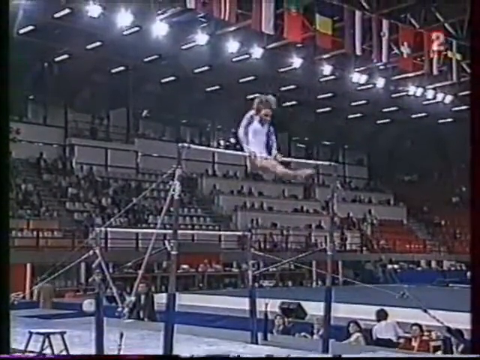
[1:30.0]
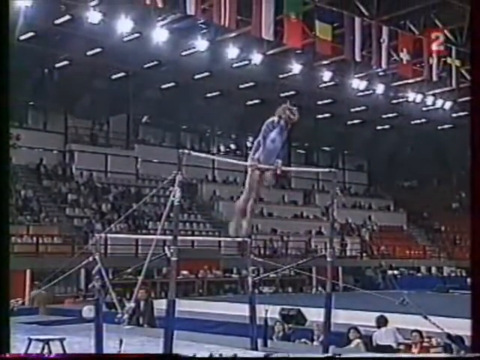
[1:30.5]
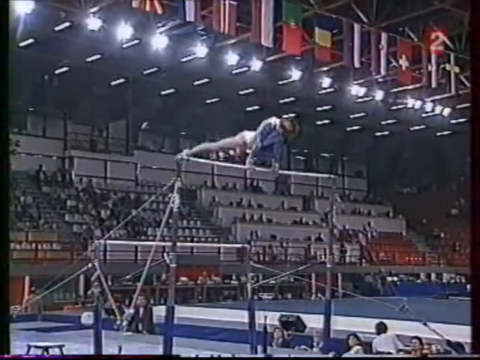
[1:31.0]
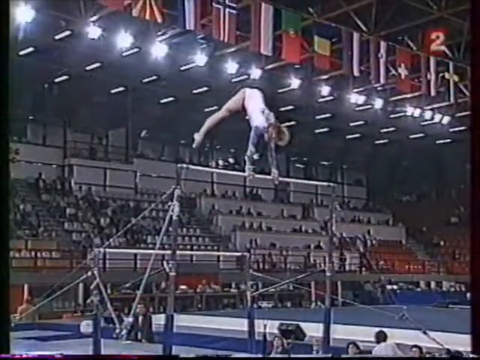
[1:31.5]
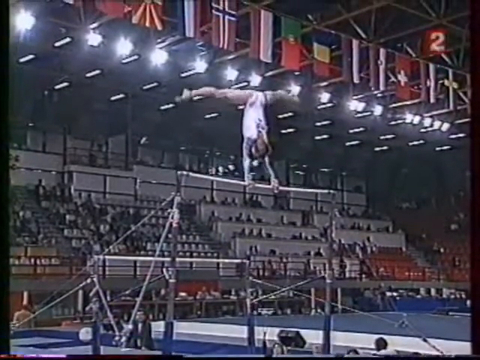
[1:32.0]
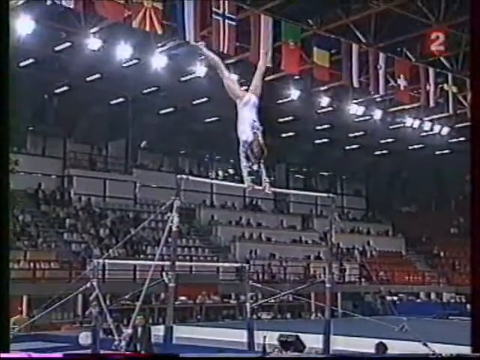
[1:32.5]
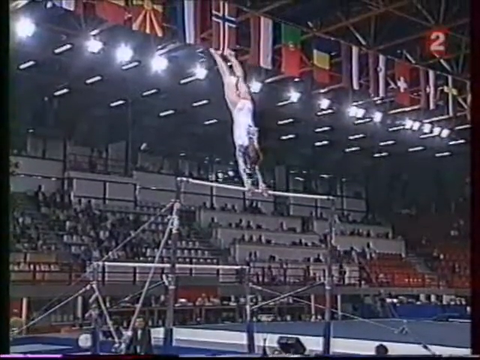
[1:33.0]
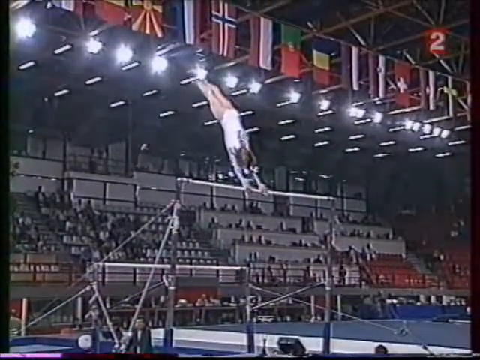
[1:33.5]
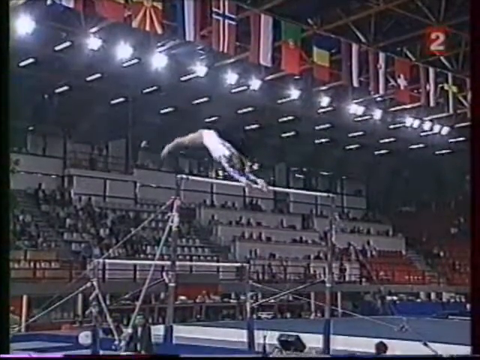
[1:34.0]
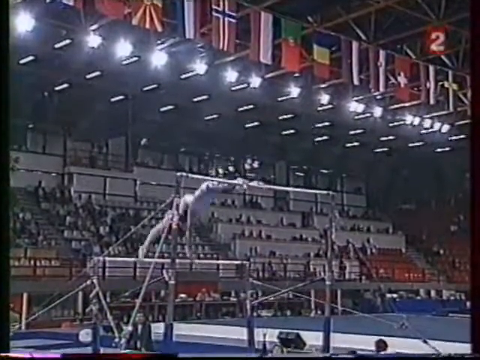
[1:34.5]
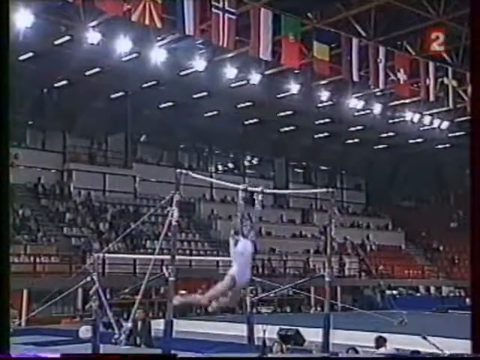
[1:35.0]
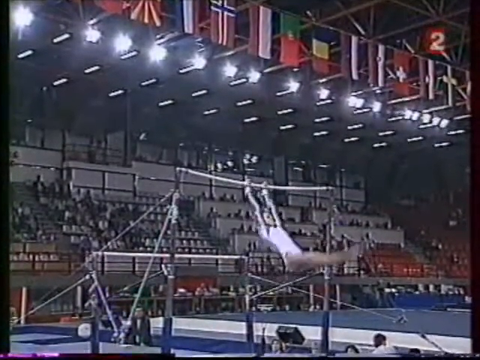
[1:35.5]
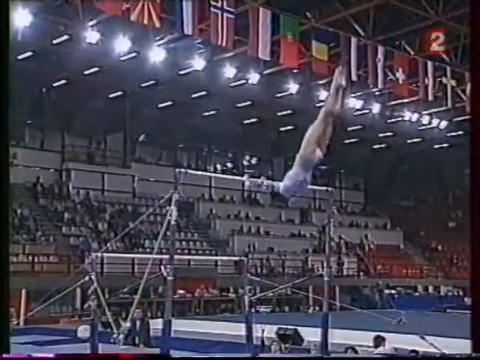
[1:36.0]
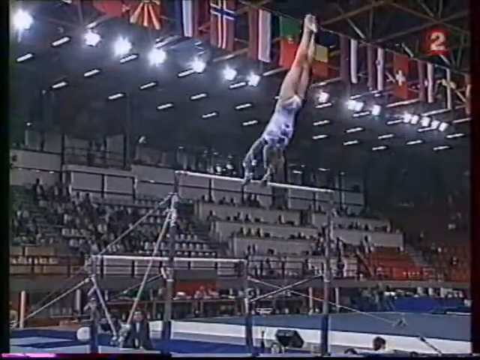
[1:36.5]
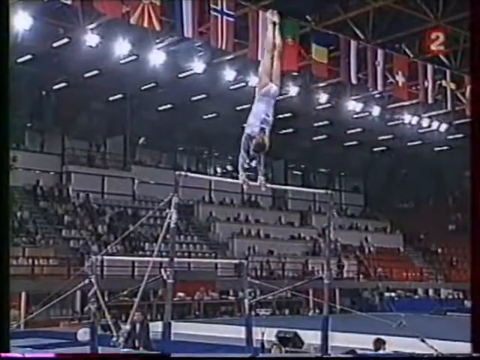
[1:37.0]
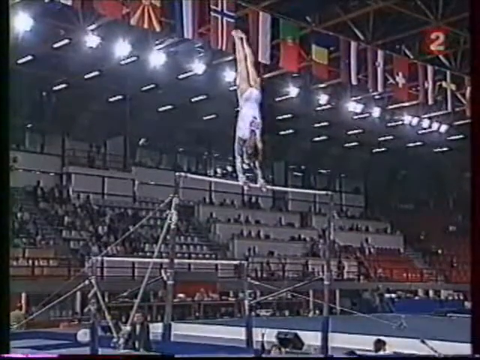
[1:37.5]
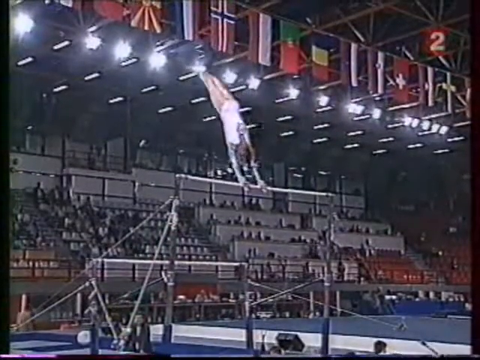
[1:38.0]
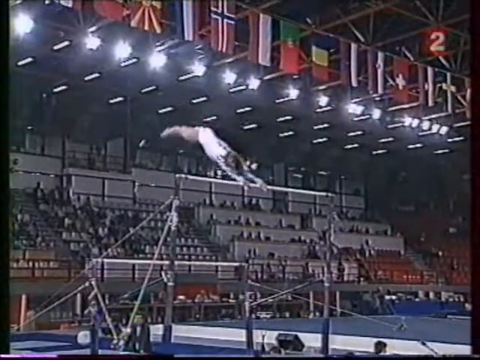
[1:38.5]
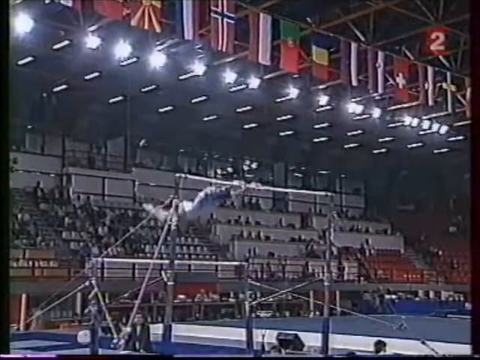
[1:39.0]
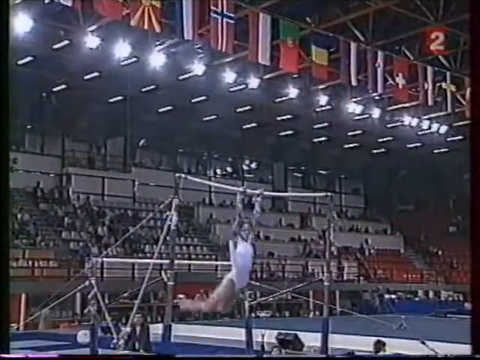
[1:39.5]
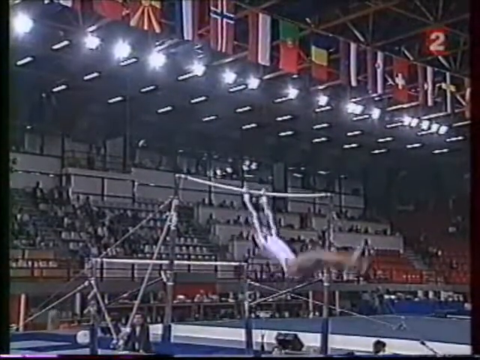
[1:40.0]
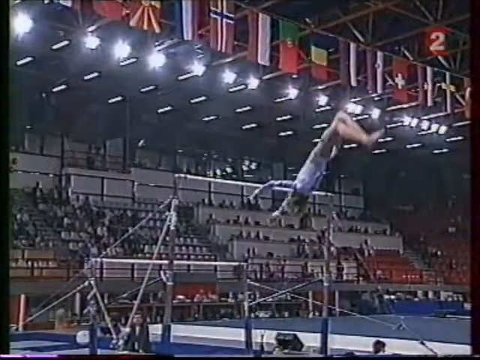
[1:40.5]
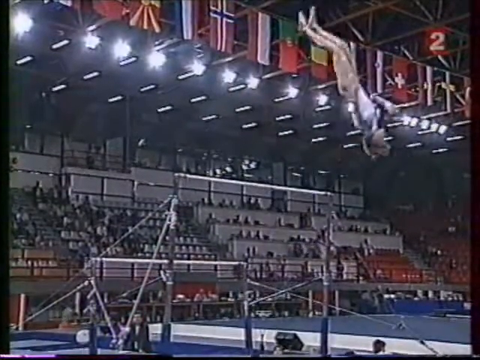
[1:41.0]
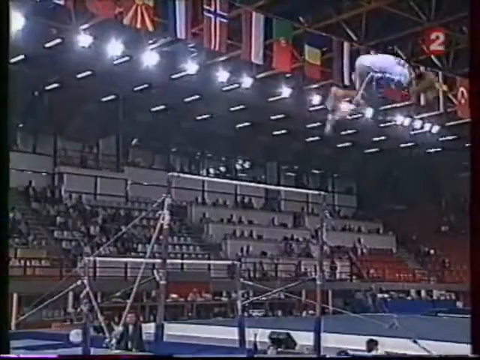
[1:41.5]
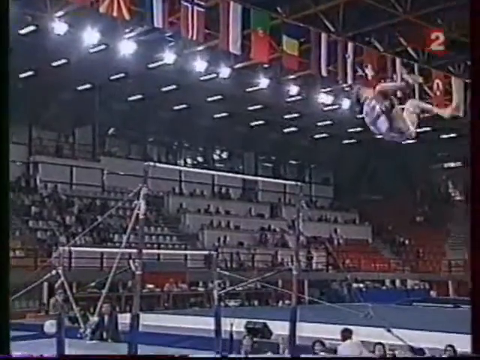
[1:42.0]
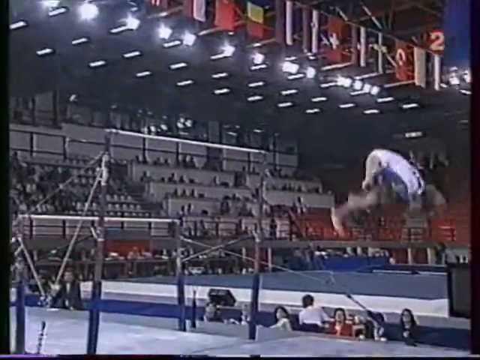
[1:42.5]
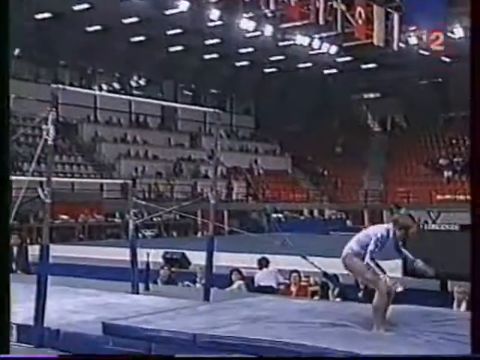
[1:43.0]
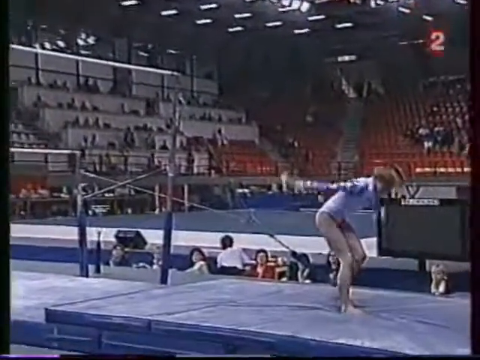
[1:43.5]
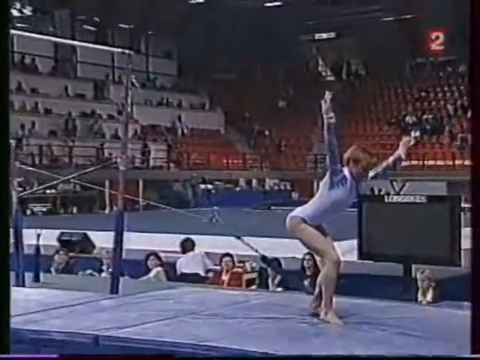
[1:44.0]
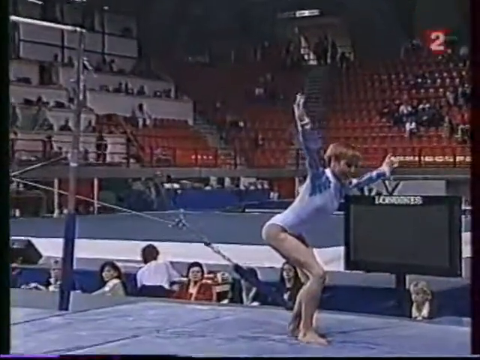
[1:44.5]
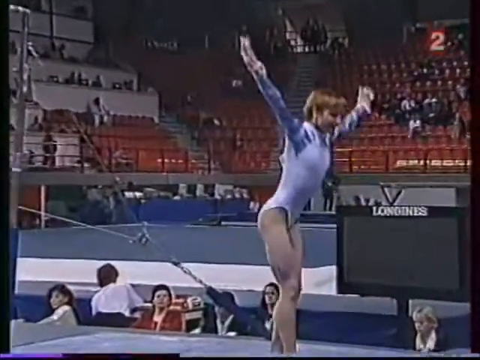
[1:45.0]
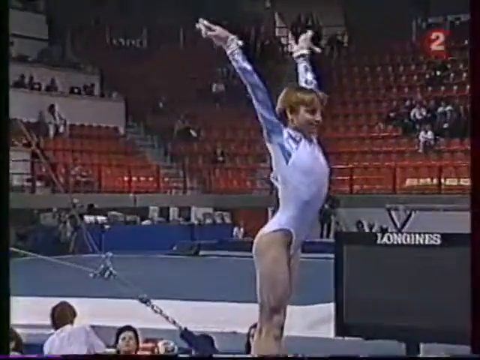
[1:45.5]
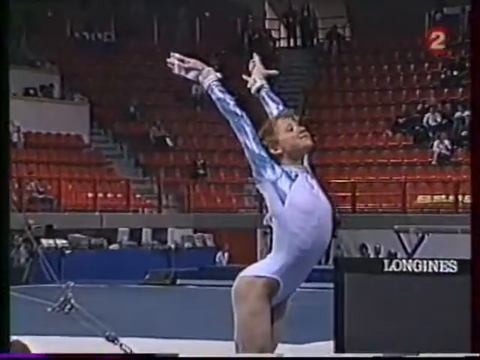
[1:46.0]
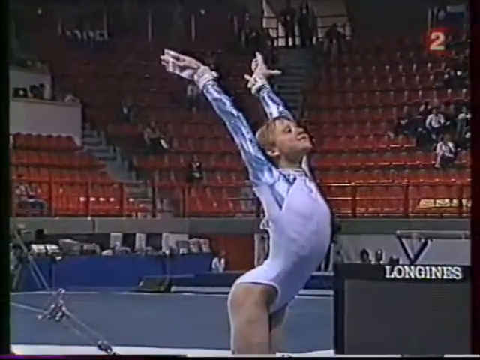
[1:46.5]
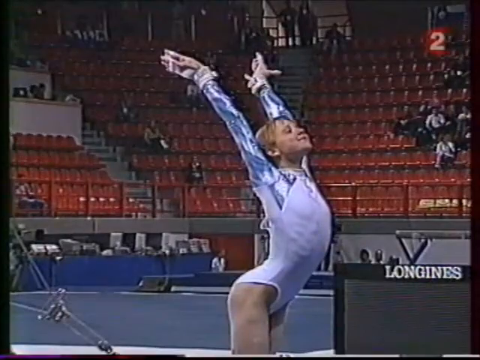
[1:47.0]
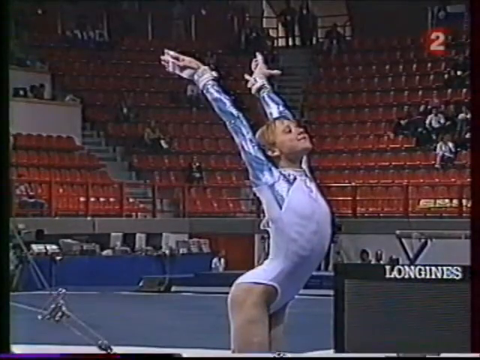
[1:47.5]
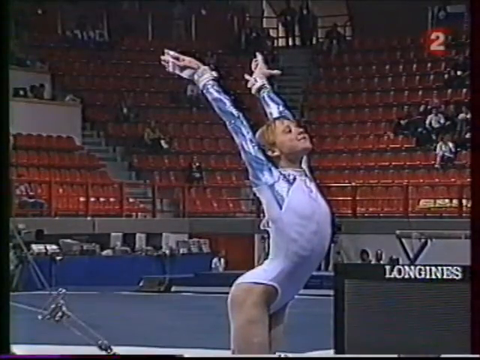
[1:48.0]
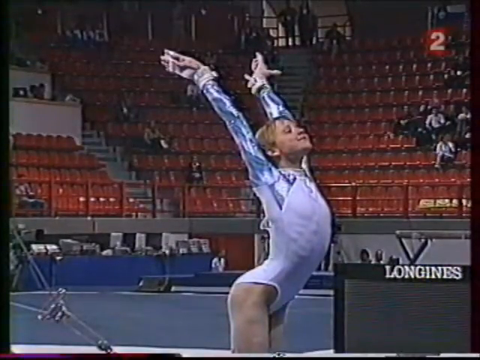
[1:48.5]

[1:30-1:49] A front shot replays the gymnast right before she finishes. On the long bar she does a couple of forward rotations for momentum, twice. As she lets go, she flips herself very high, putting her hands underneath her hamstrings to pull her knees up quickly to her chest as she comes back down. Her legs, which were spread out a little, are pulled into a narrow stance, and she lands almost completely straight with her knees slightly bent, her arms out to her sides for balance. Once stable, she holds her arms out in a V shape, probably pulls her hair back from her face, and holds her chin up in the air. She is very thin, with her ribs almost visible. She wears a tight, long-sleeved, one-piece leotard that is mainly white, with blue around the sleeves and blue stripes around the shoulders on both sides. People at the bottom watch, and there is a blue mat, apparently for a different event, with nobody on it.